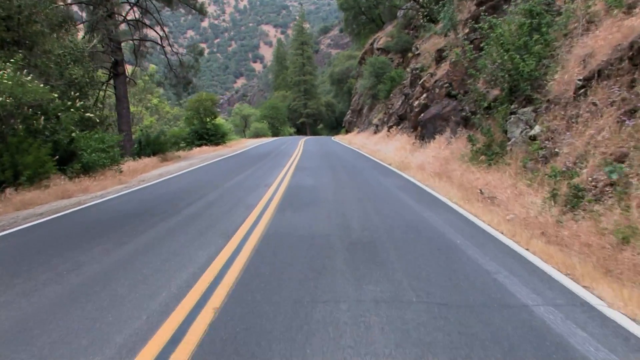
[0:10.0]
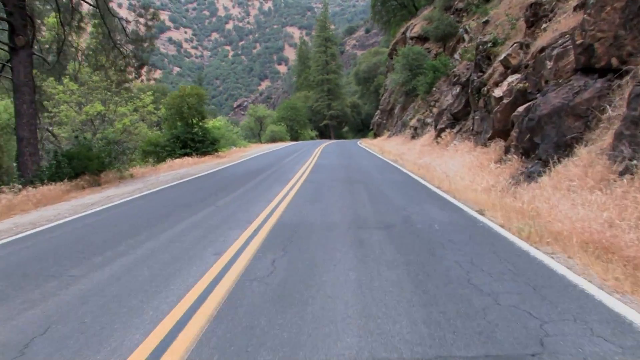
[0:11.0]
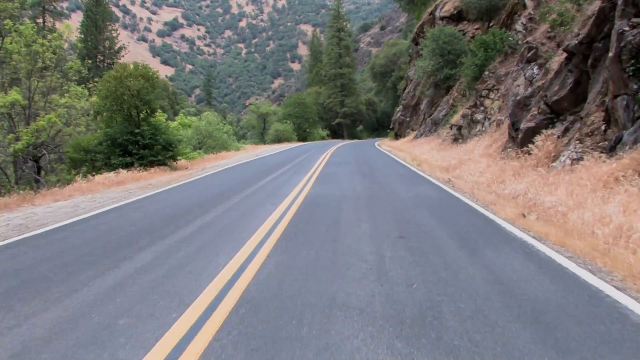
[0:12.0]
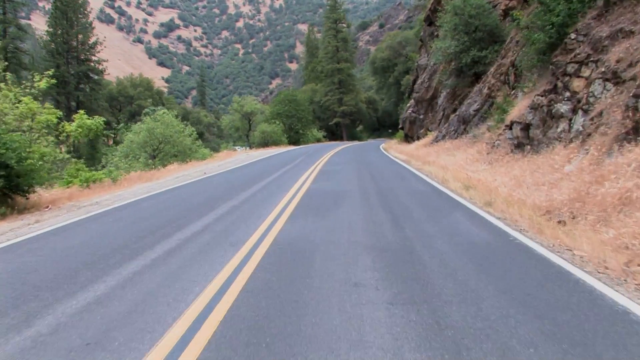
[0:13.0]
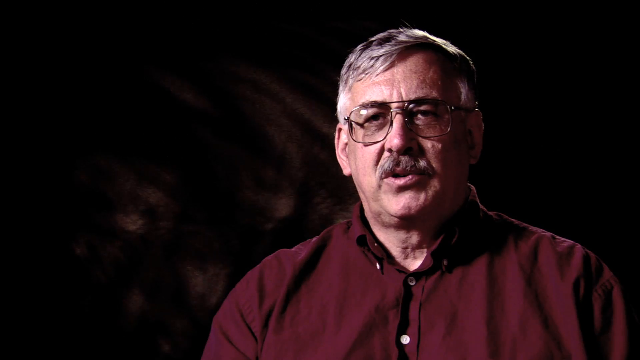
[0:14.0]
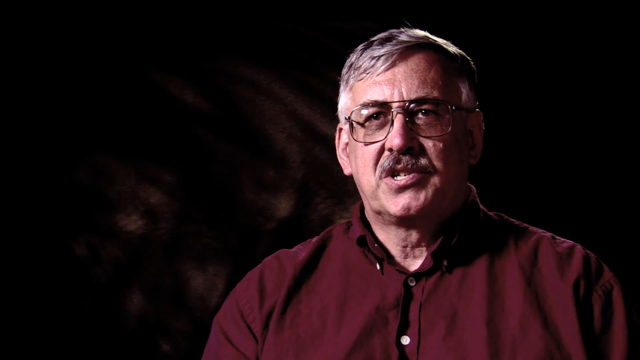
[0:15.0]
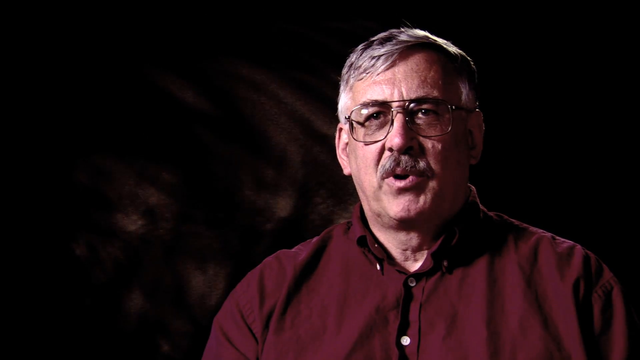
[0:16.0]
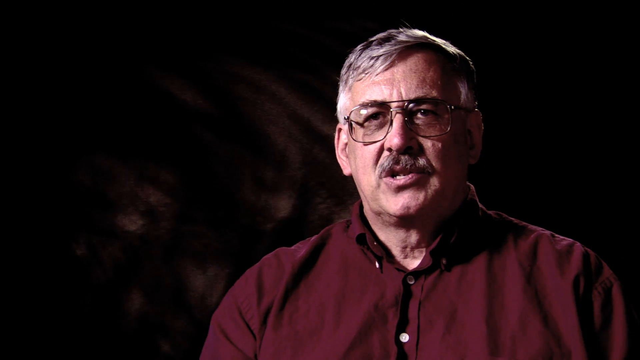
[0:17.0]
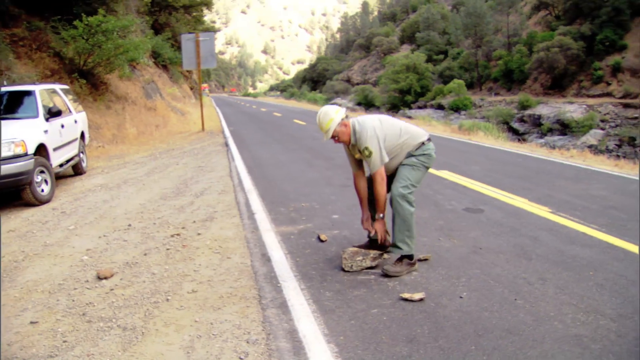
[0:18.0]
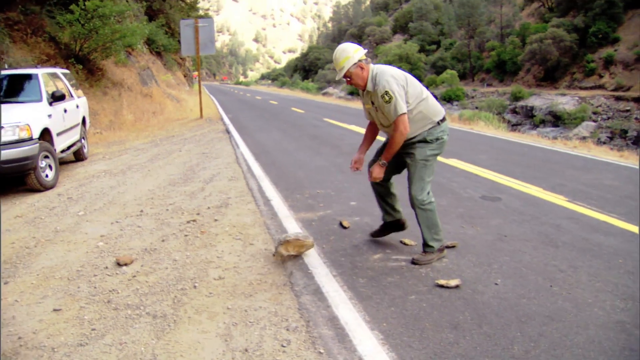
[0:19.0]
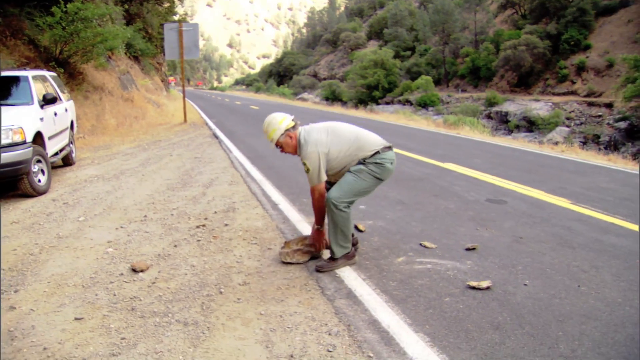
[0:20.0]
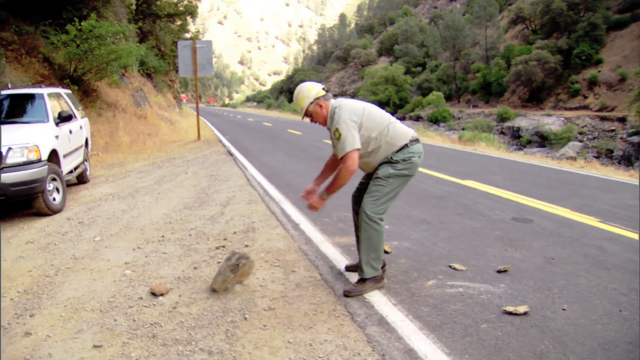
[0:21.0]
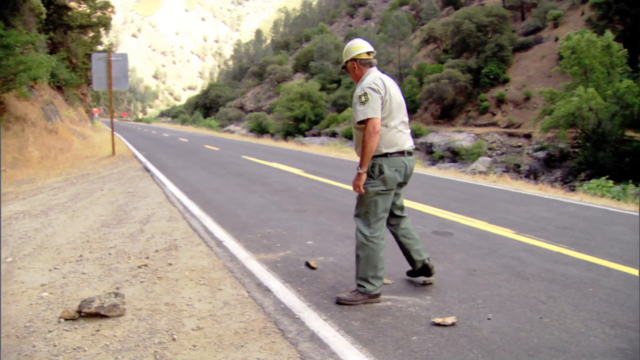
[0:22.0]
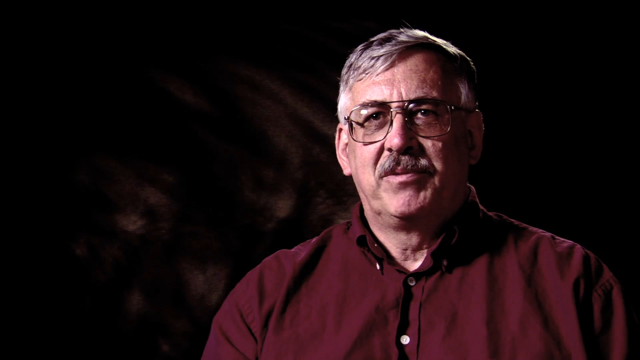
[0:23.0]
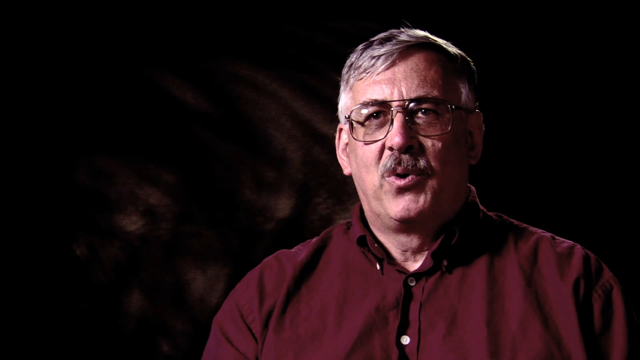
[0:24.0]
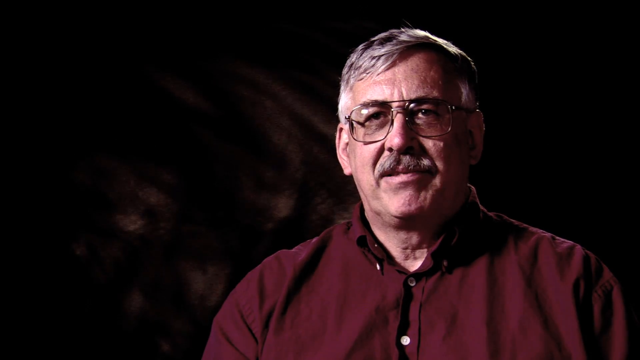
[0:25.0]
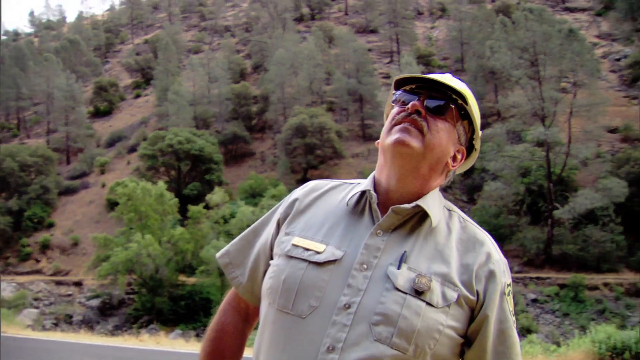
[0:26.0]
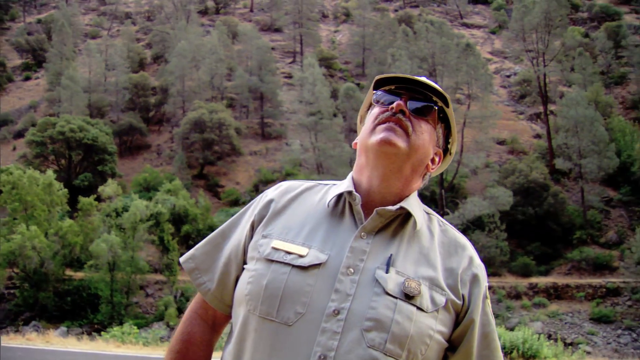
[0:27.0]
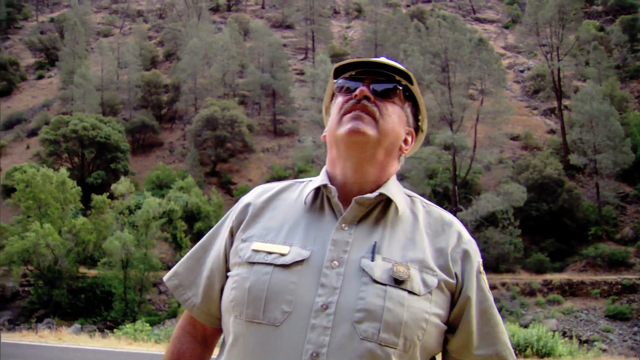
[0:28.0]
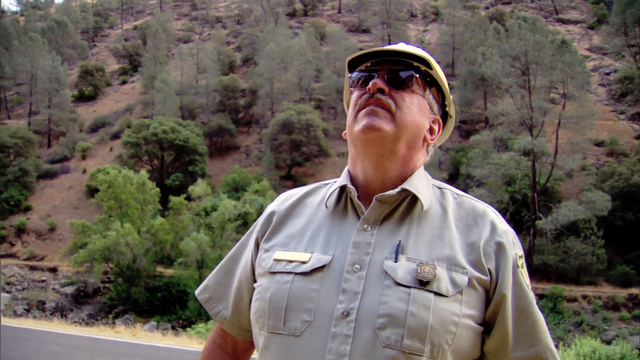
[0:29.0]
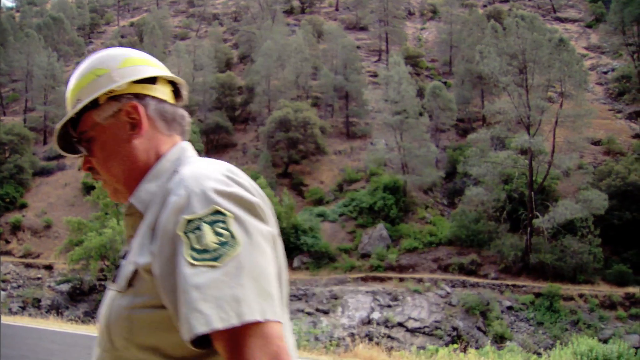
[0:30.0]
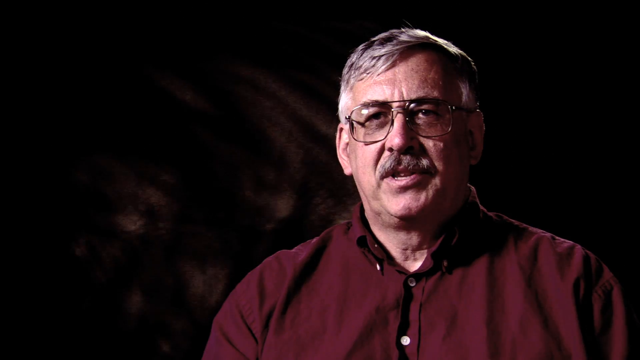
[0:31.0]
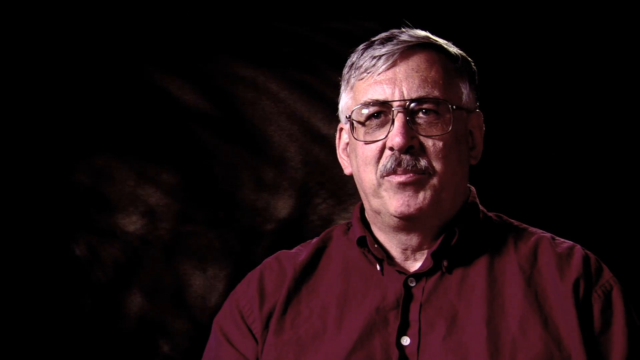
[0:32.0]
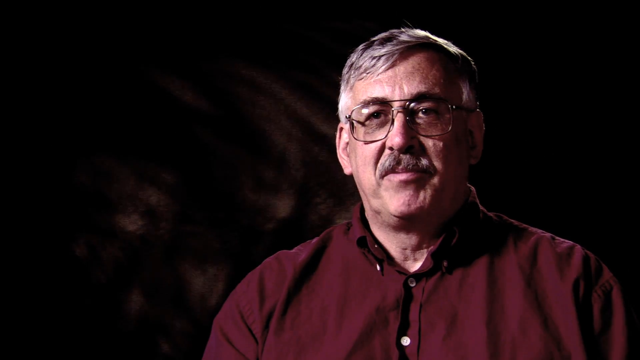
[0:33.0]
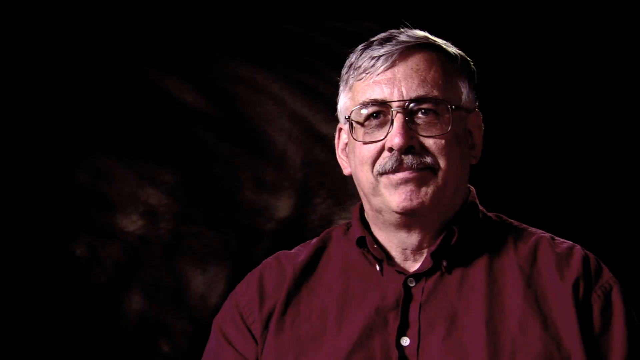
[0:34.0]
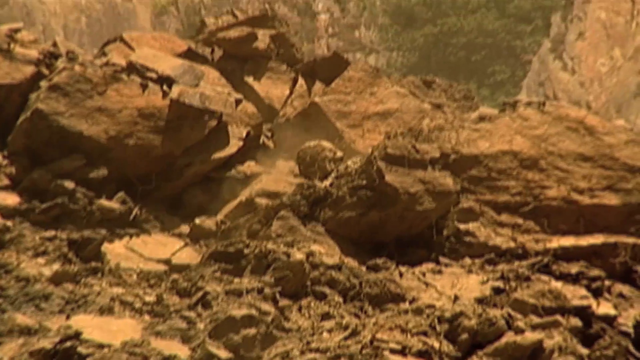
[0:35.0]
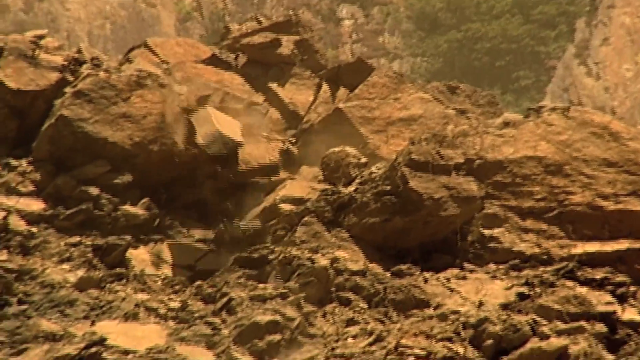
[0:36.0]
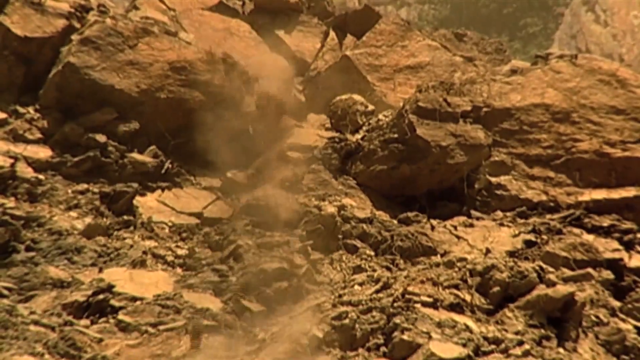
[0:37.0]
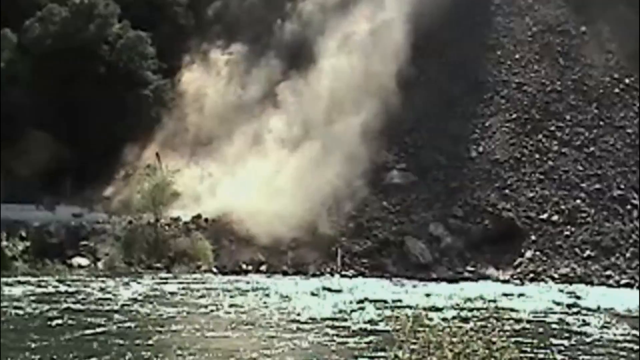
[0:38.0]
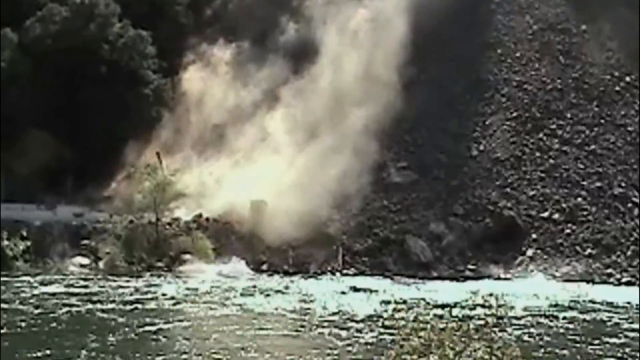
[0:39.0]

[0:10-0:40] The view opens onto the open road: a two-lane paved road with a double yellow line runs through a rocky mountain area with rocks and lots of greenery, seen from the perspective of someone driving through it. A man in a hard hat is outside on the road, with his white vehicle parked to the side, clearing the road of debris from fallen rocks. The video cuts back and forth between the interview and the man outside, who looks upward toward where the rocks may have fallen from. Quick clips then show rock falls occurring, with rocks coming down, splashing into a neighboring river and being pulled down the raging river, which flows eastward in the video.